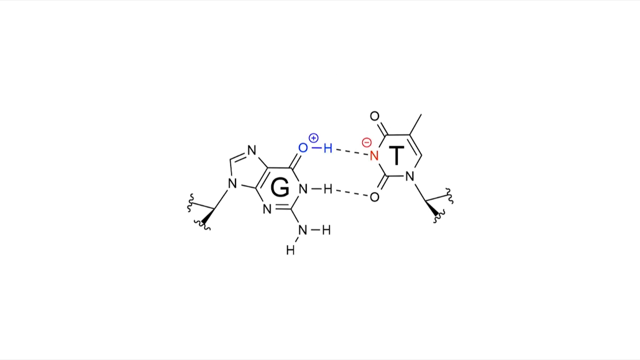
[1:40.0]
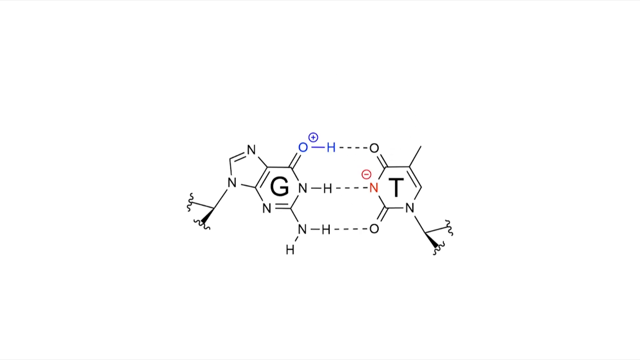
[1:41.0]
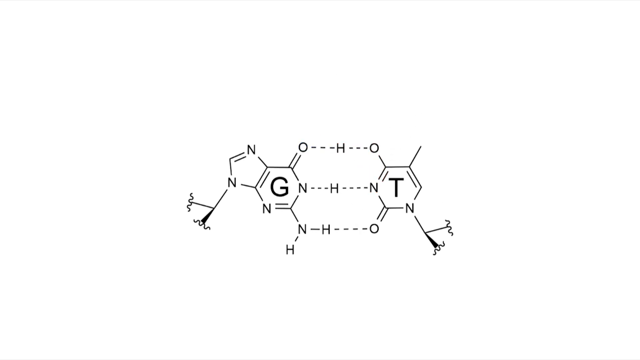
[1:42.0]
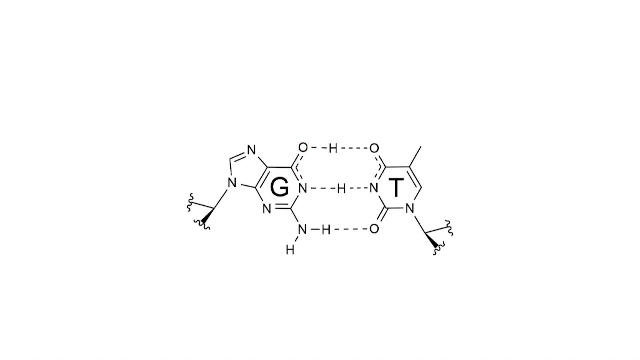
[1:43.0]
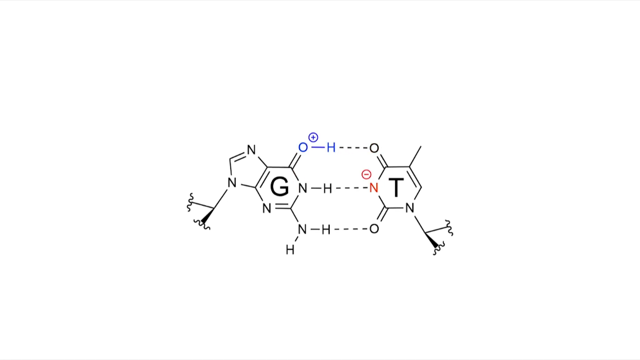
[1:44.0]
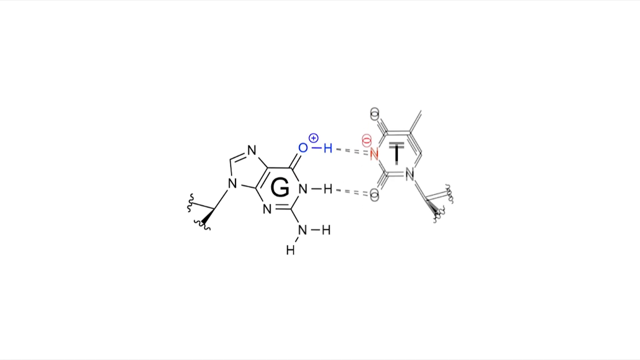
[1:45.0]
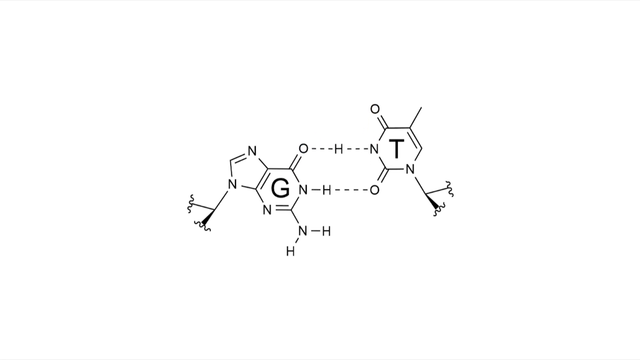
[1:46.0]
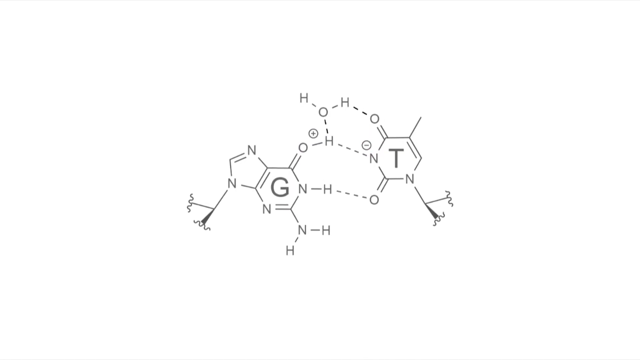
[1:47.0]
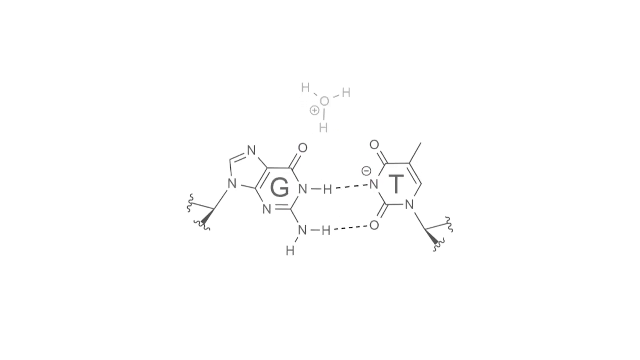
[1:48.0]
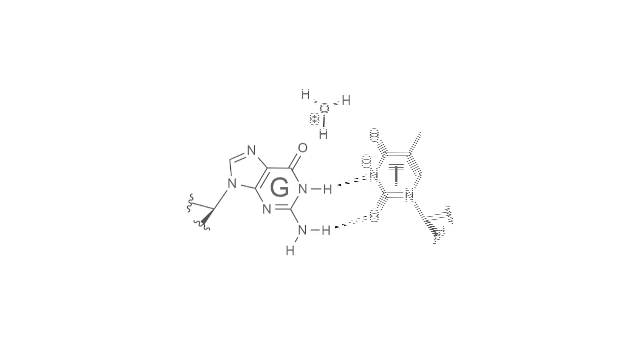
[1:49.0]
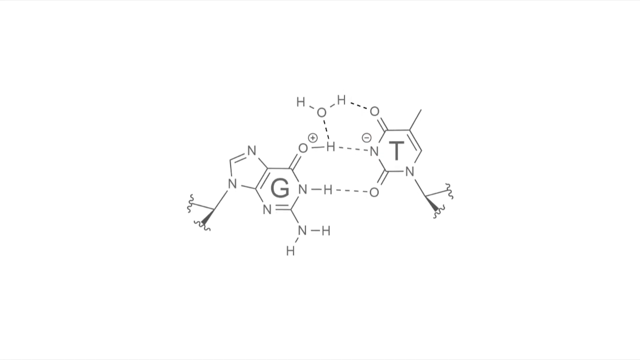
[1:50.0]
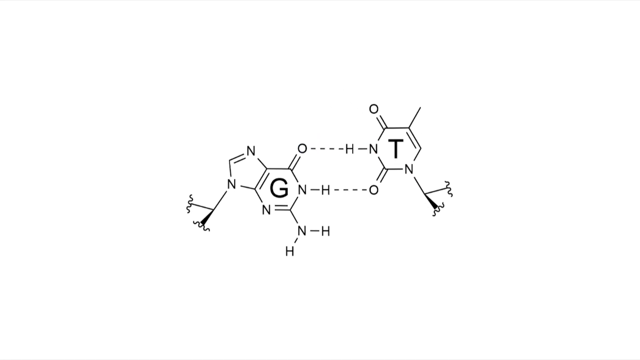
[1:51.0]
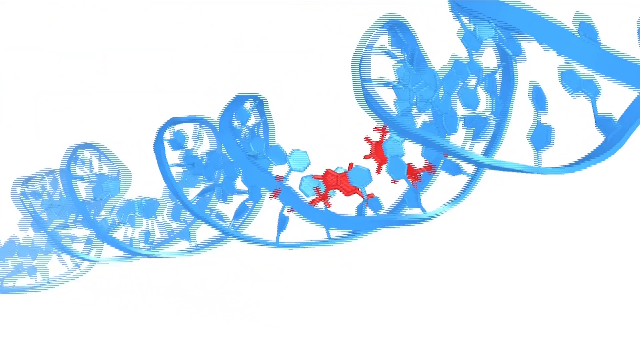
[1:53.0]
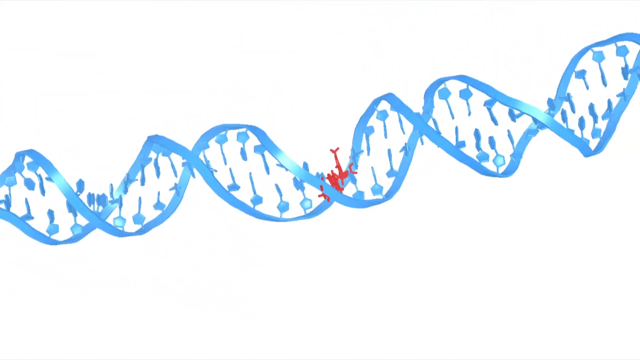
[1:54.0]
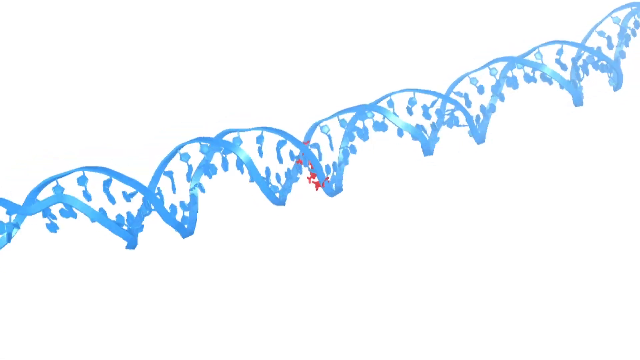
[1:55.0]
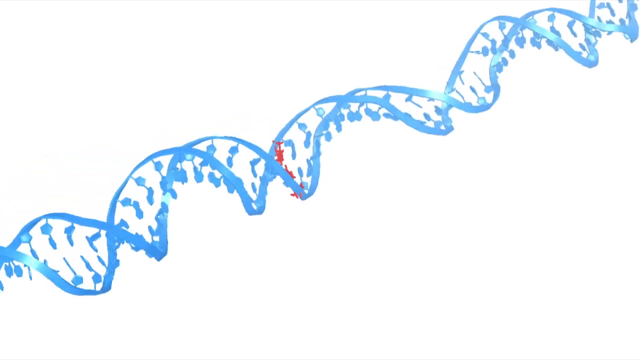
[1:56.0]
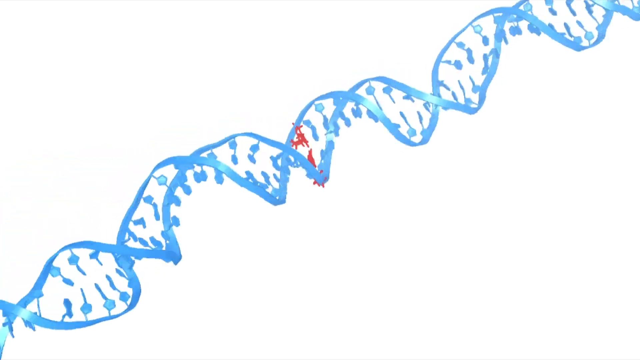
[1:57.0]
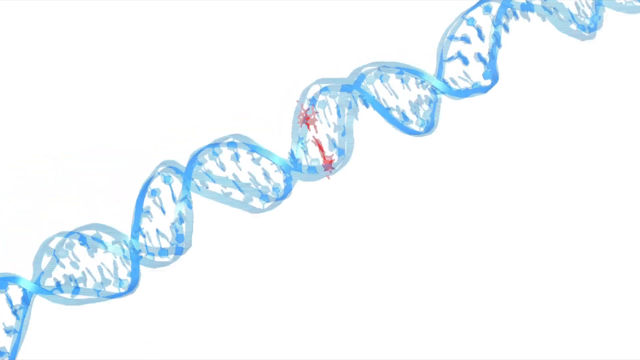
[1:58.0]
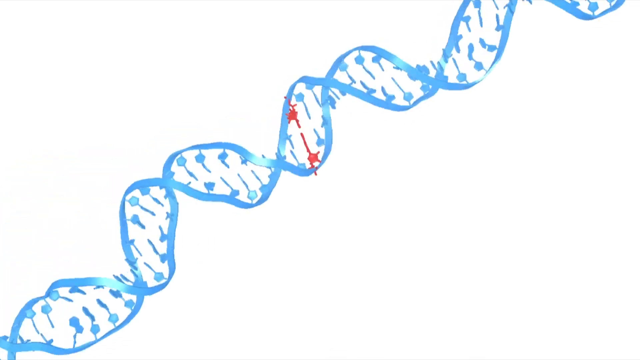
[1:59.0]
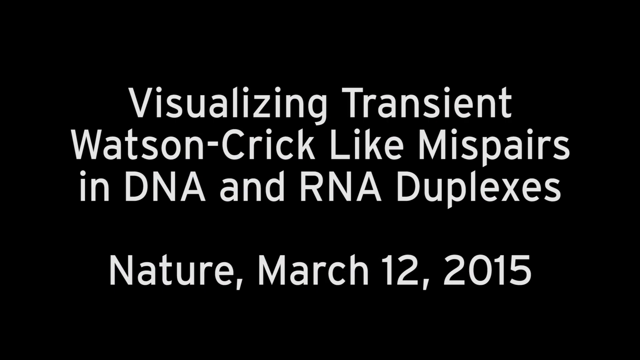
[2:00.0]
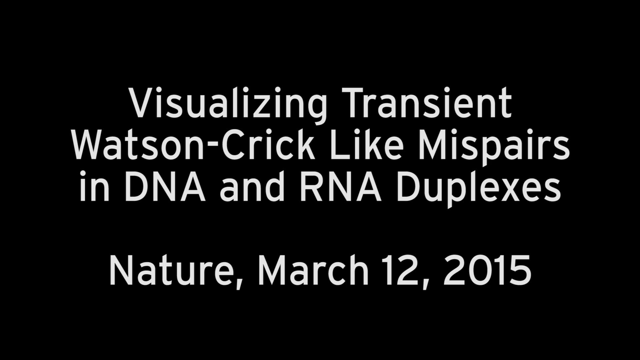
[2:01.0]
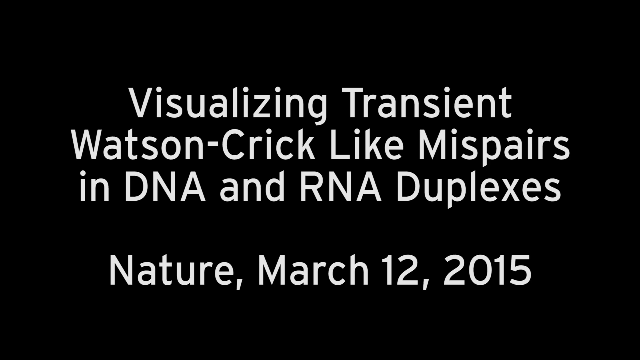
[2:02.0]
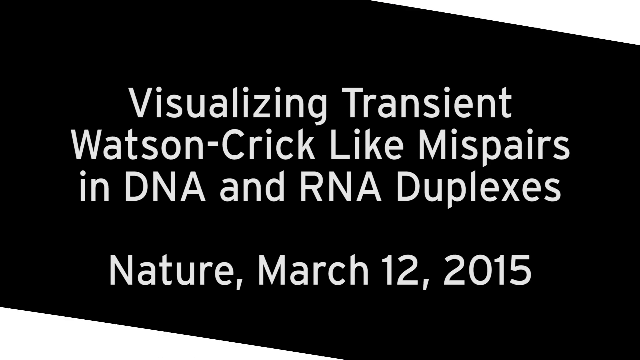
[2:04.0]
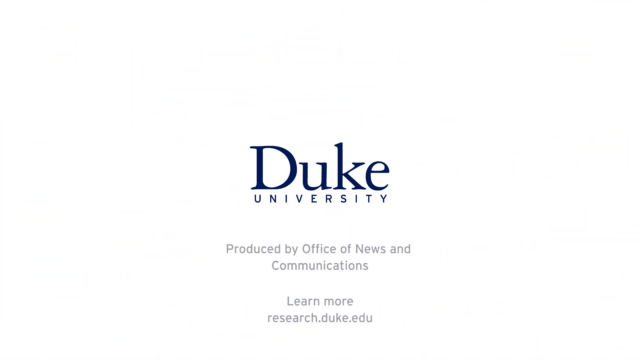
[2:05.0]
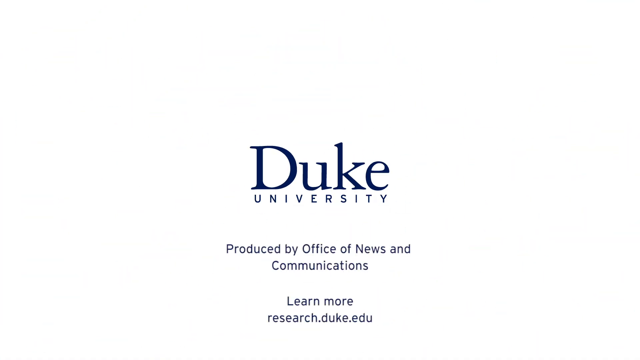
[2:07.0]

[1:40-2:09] The molecular representation, structural formula and bond representation keep changing, but only on the right side, where the letter T is; the letter G on the left side stays fixed. The elements change places and the T molecule shifts in different directions, bonding differently in different positions. The video then switches to the blue DNA strand circulating around the video, shown horizontally and spinning, then in a diagonal view, still spinning. The red bits, where mutation occurs, differ from the rest of the DNA and spin along with it. Next, white text on a black background reads "visualizing transient Watson-Crick-like mispairs in DNA and RNA" and "Nature. March 12, 2015." As the video ends, it says "Duke University".